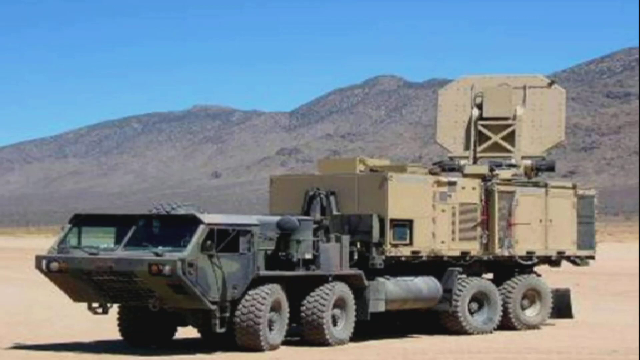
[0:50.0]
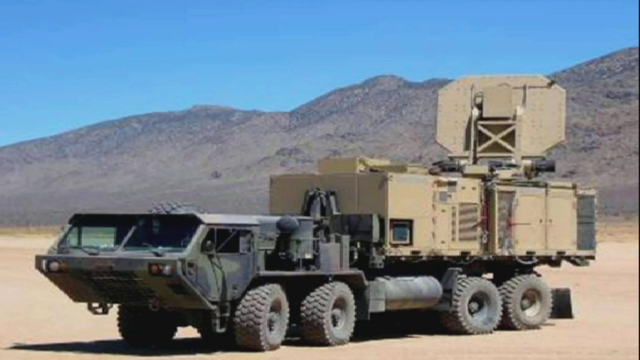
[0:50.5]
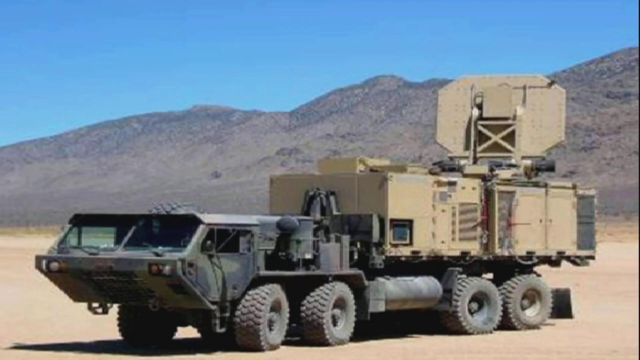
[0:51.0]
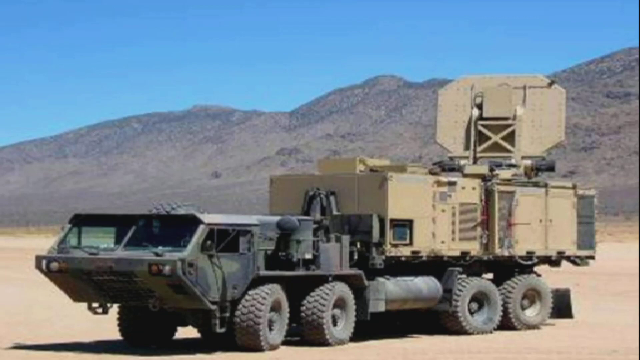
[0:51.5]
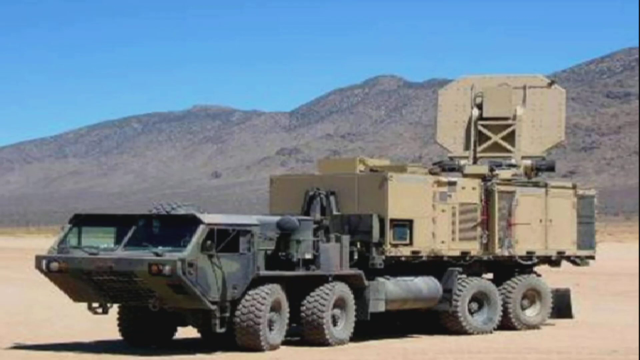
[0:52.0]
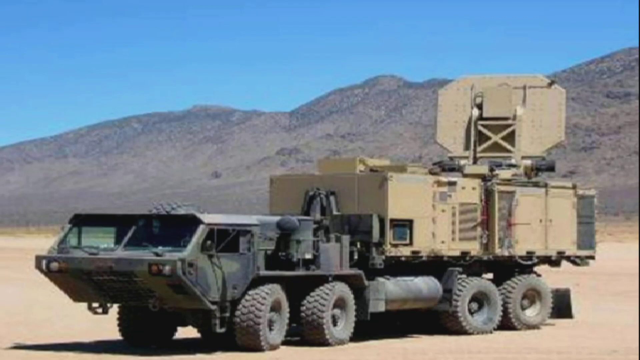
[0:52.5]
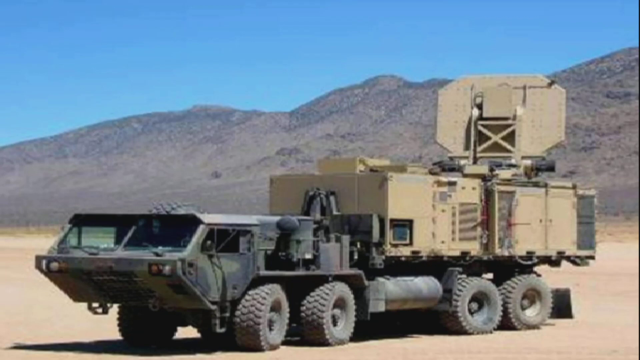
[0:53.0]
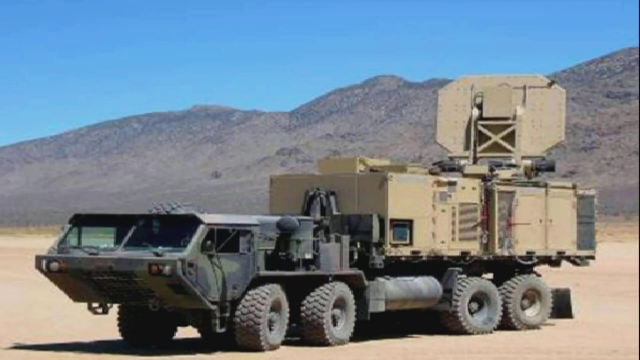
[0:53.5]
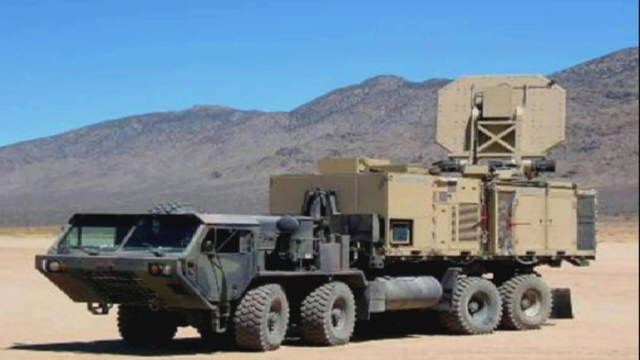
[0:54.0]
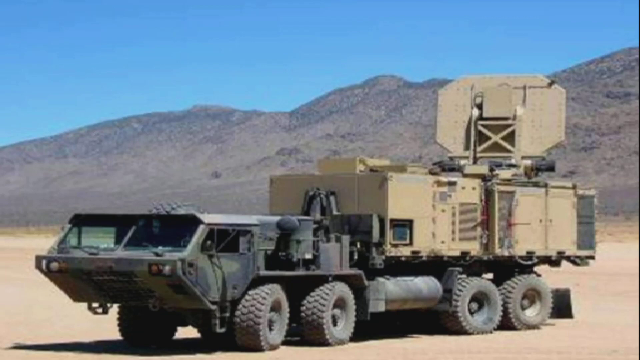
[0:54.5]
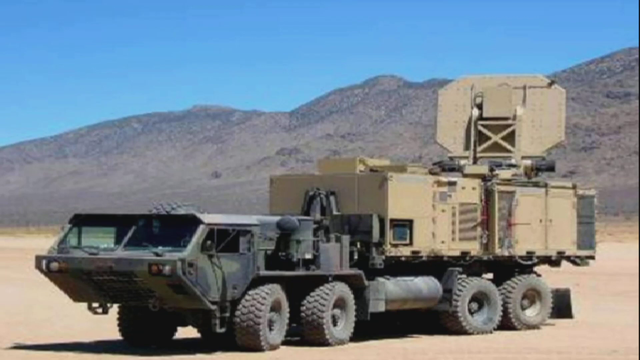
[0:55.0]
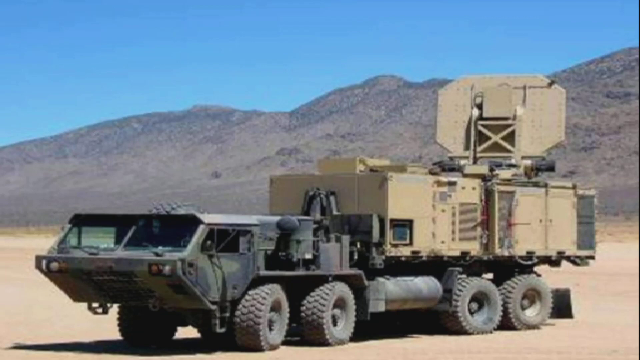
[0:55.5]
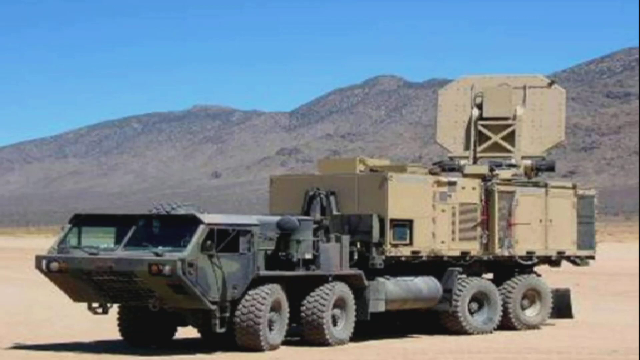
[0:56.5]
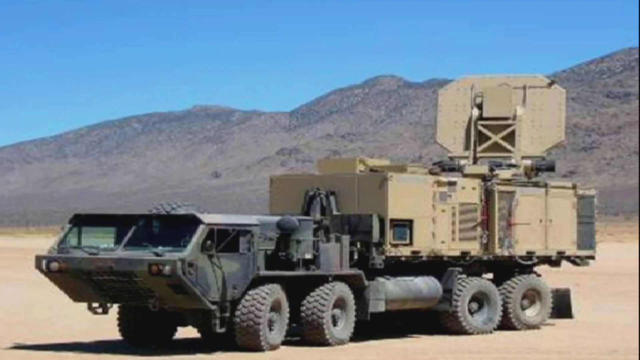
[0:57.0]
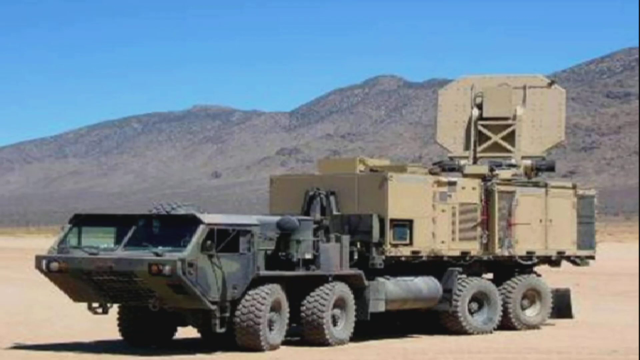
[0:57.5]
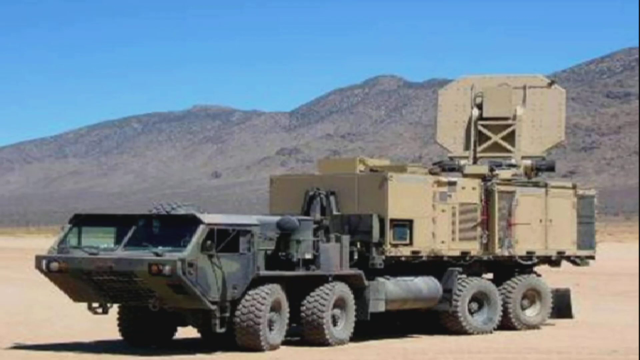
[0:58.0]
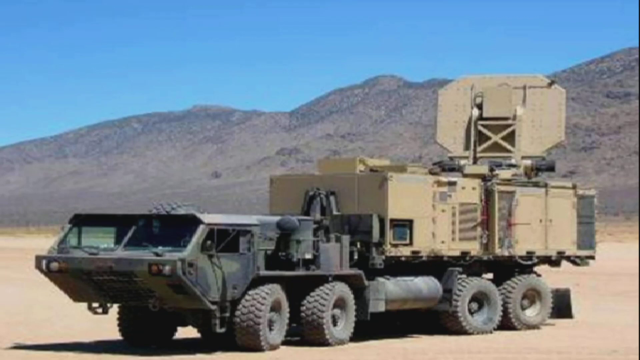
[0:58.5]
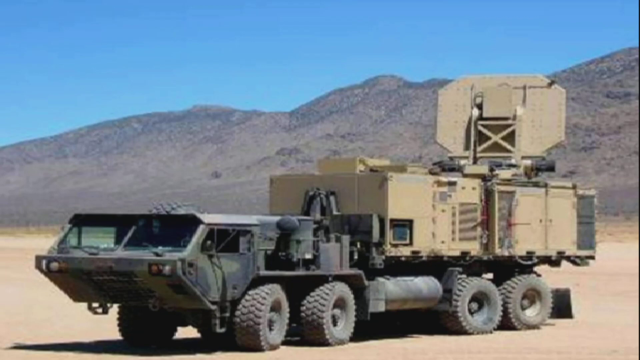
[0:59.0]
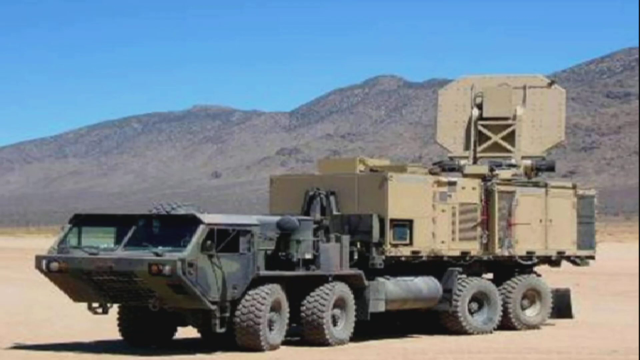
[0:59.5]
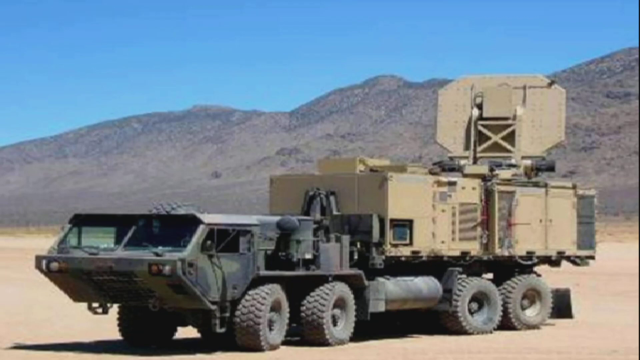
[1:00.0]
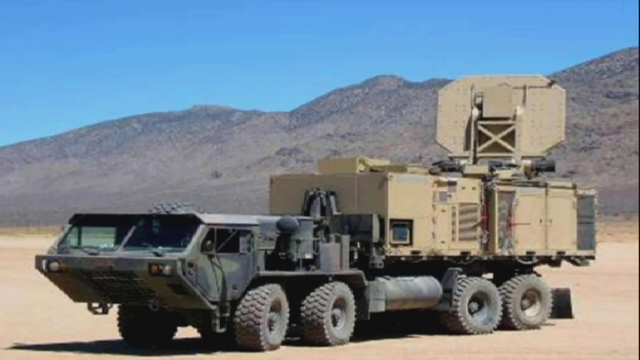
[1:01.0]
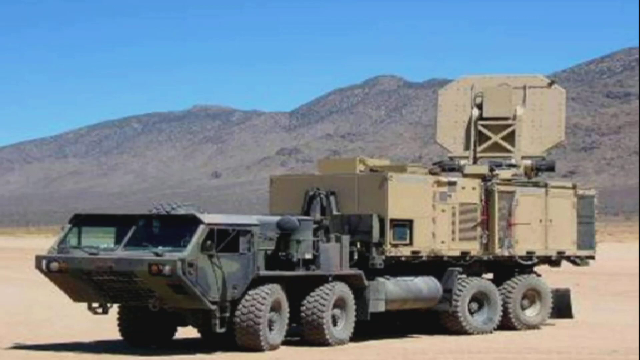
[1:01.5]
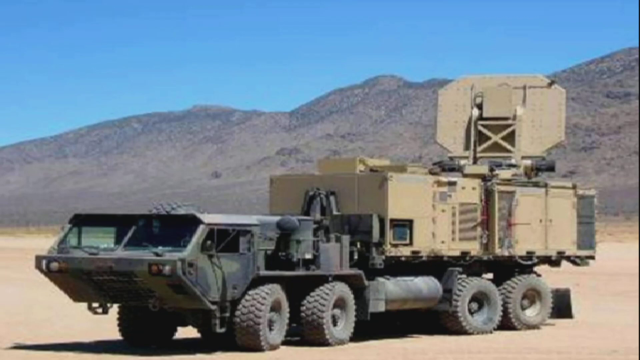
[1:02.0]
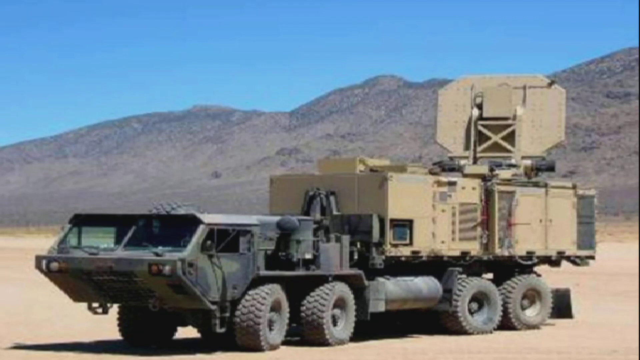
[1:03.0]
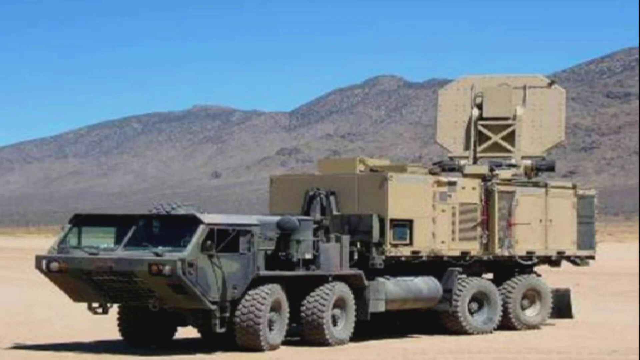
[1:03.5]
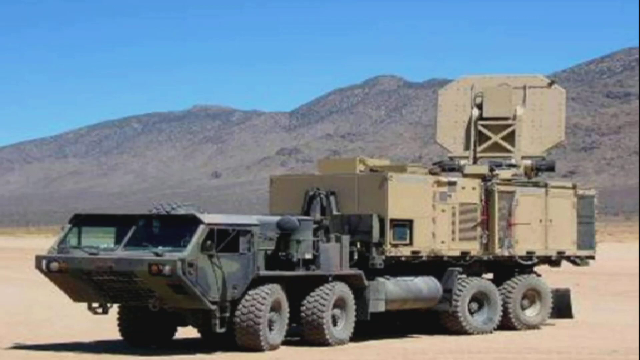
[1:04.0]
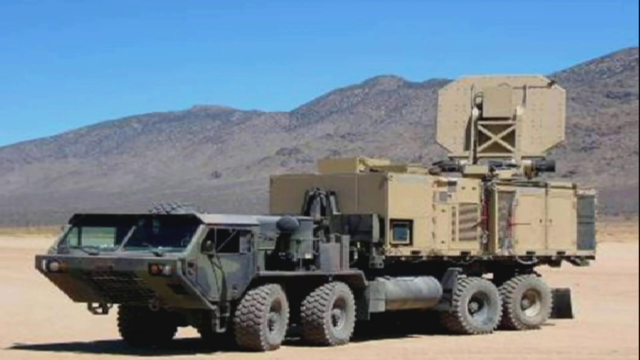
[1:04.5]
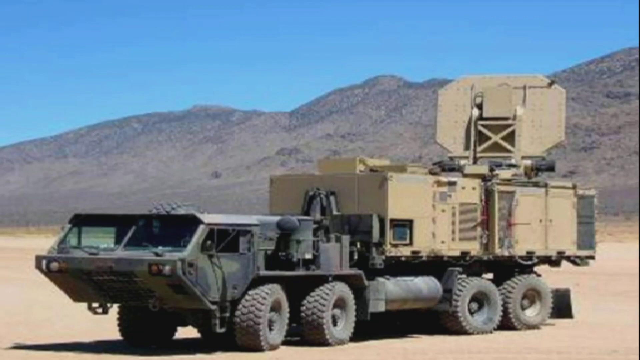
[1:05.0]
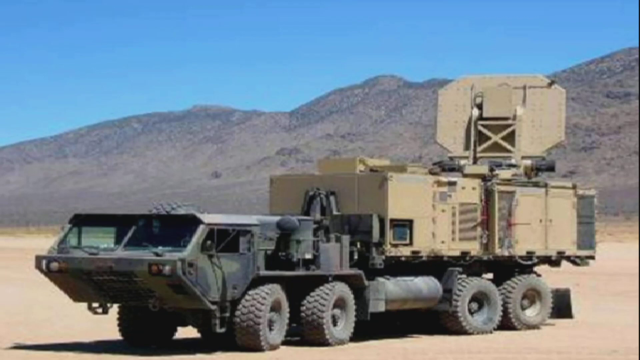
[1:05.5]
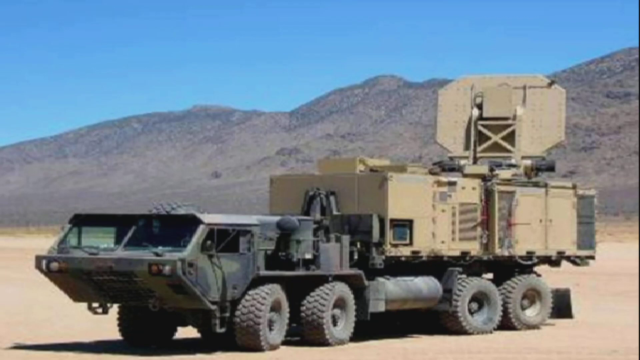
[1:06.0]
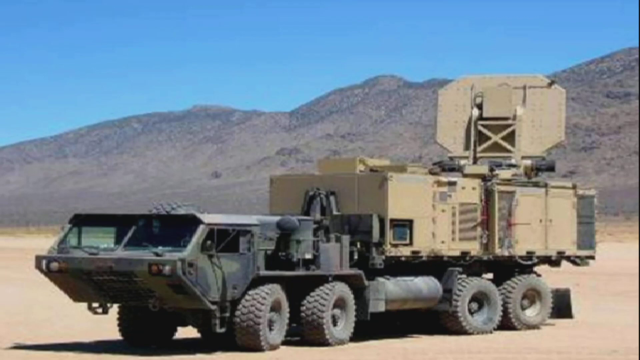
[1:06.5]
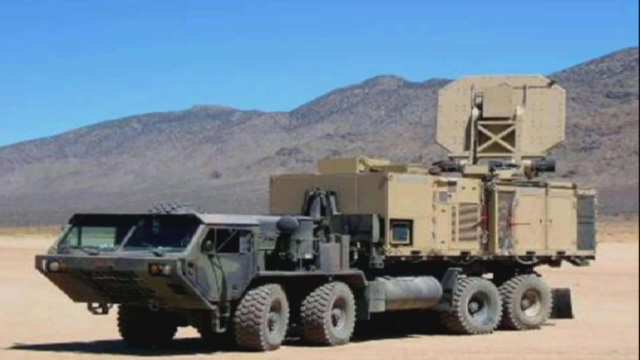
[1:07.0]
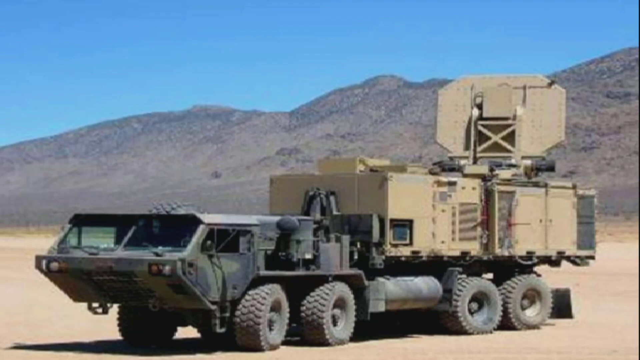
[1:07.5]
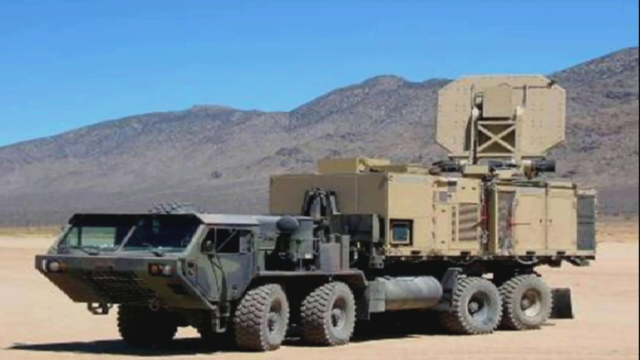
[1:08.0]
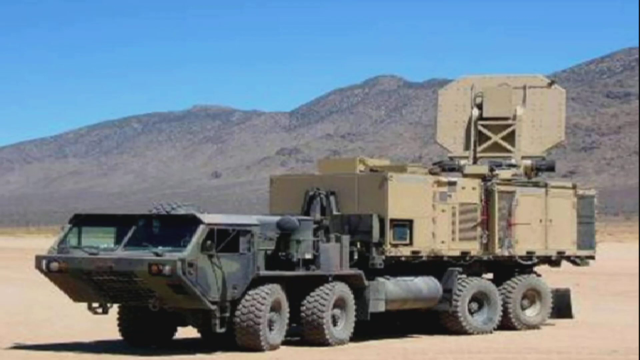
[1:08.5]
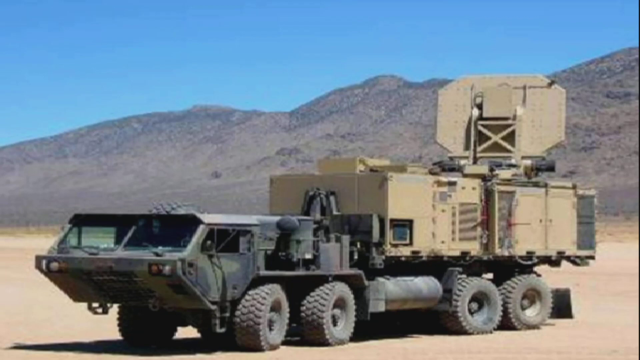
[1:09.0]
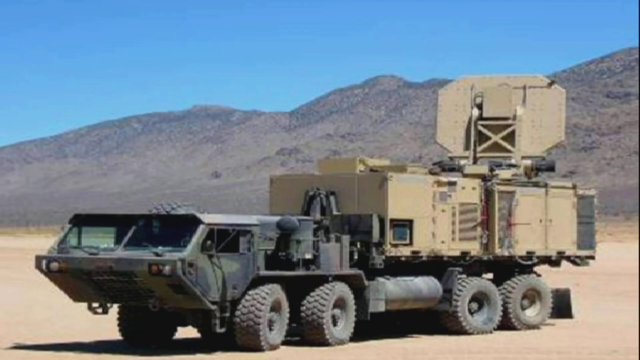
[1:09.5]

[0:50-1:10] The heavy truck is still parked there. Its wheels and tank are visible, and there is an open space at the back where people could apparently be loaded.